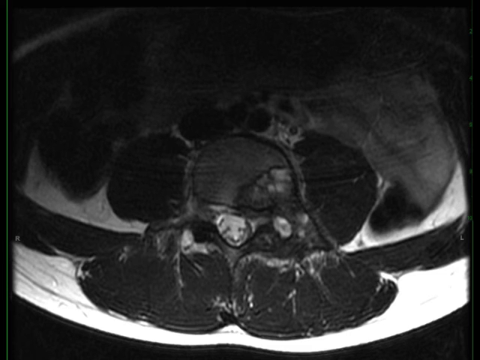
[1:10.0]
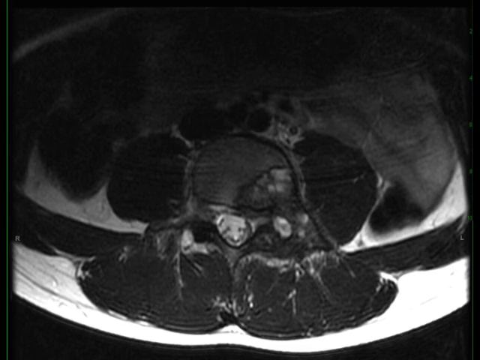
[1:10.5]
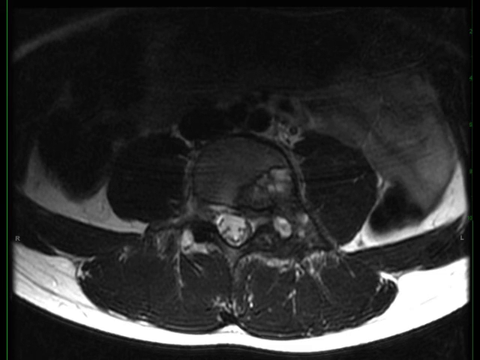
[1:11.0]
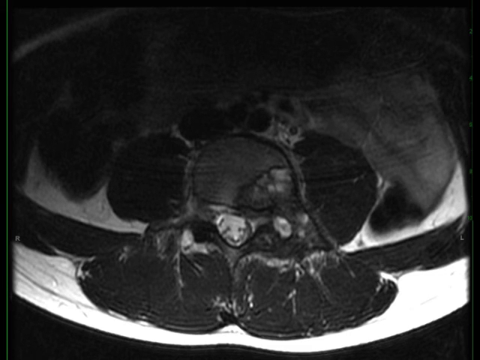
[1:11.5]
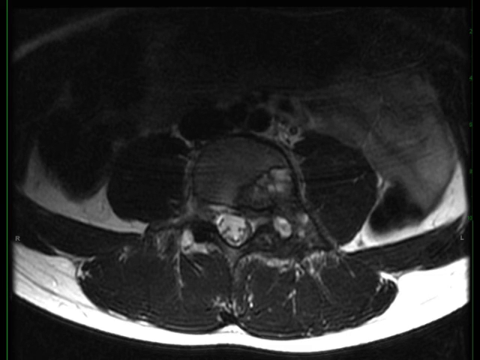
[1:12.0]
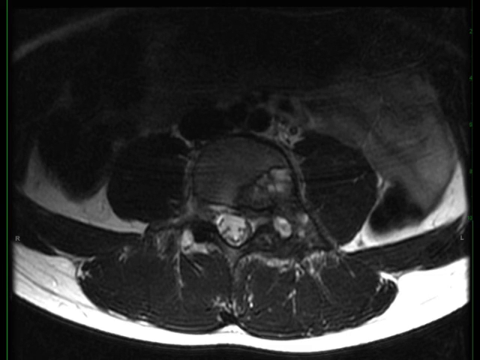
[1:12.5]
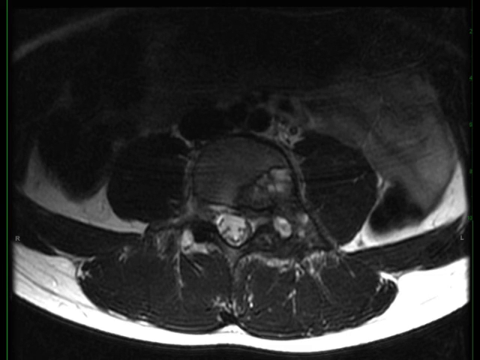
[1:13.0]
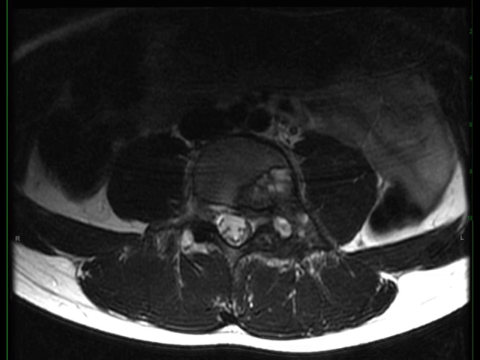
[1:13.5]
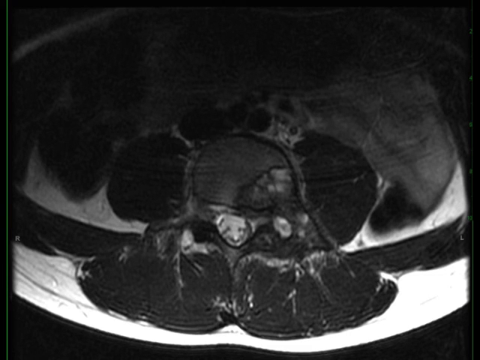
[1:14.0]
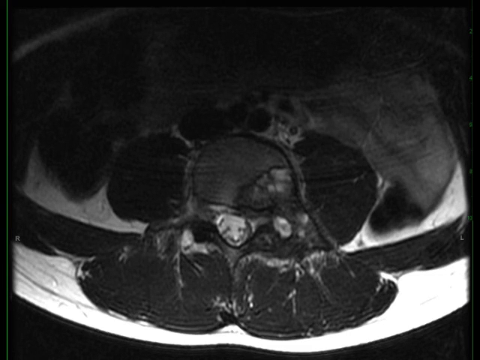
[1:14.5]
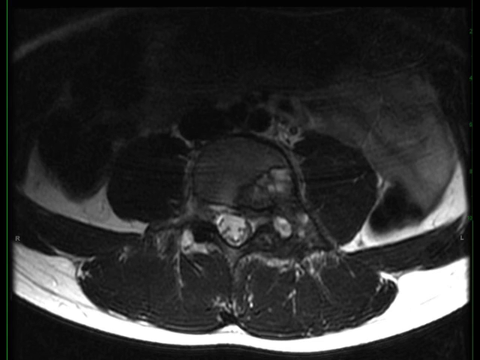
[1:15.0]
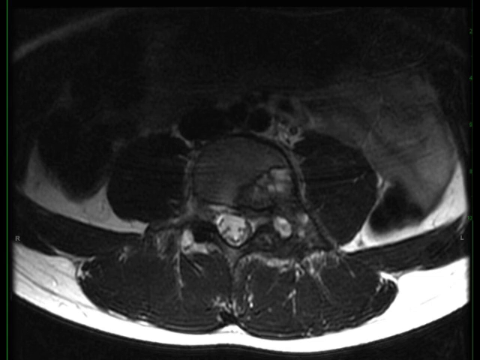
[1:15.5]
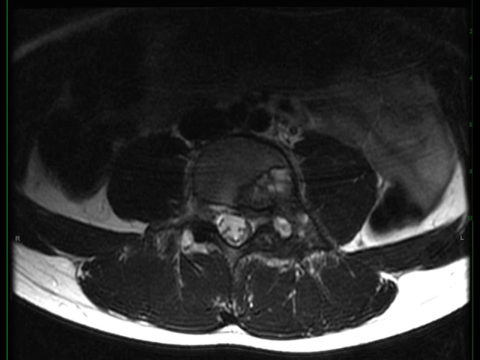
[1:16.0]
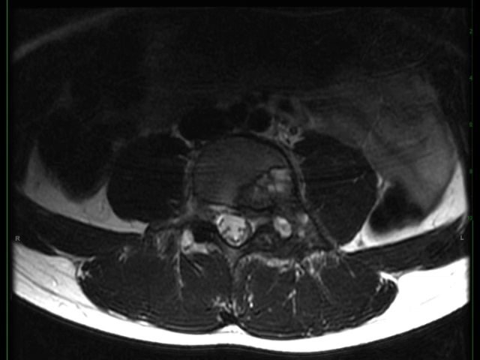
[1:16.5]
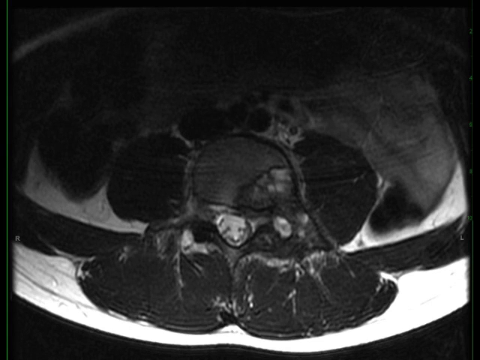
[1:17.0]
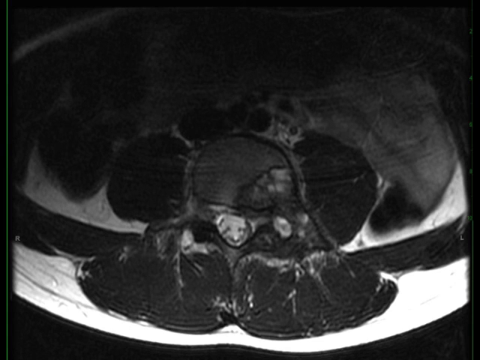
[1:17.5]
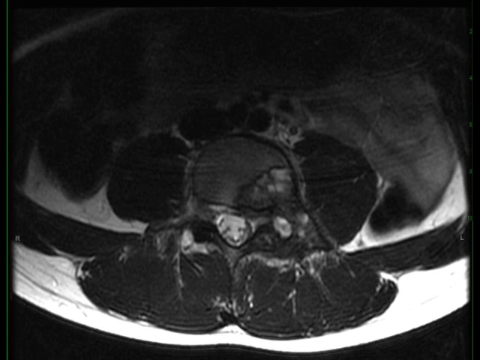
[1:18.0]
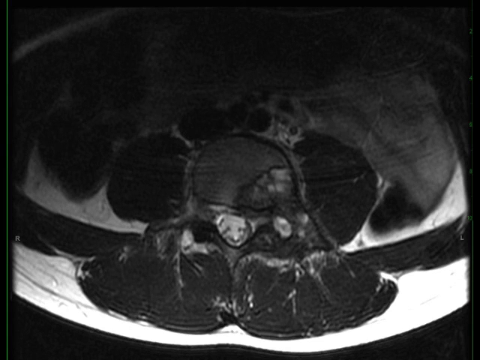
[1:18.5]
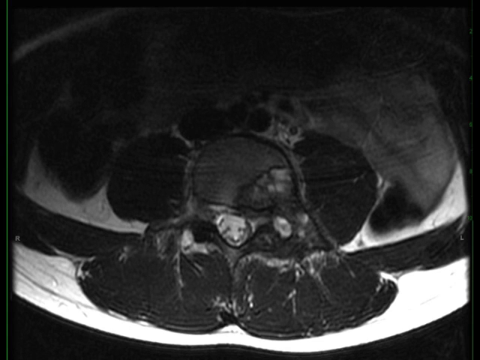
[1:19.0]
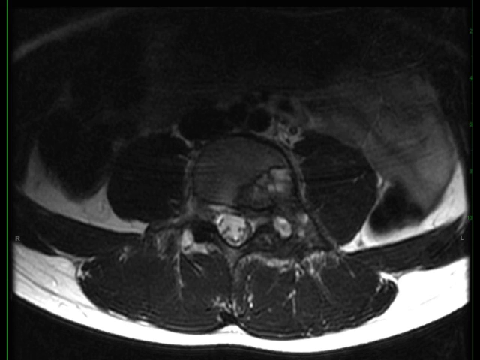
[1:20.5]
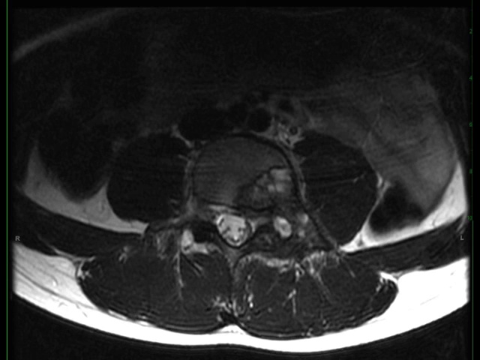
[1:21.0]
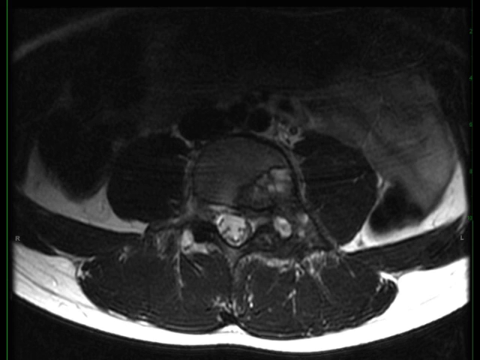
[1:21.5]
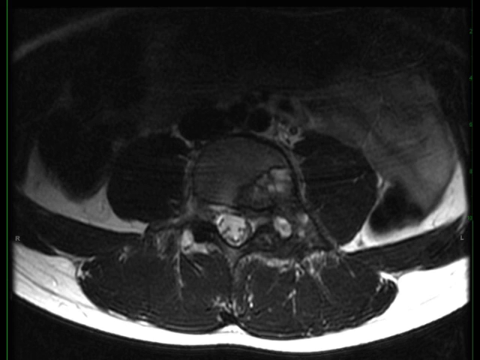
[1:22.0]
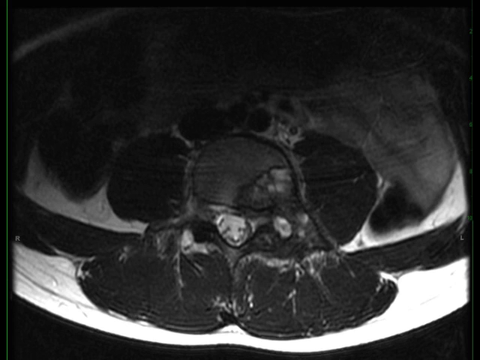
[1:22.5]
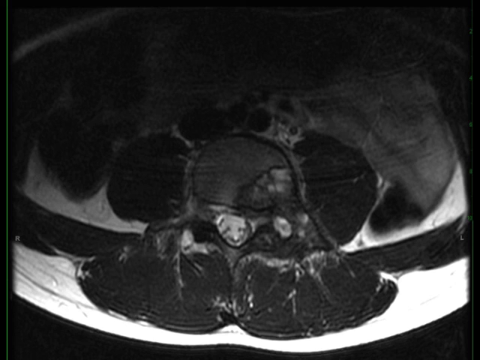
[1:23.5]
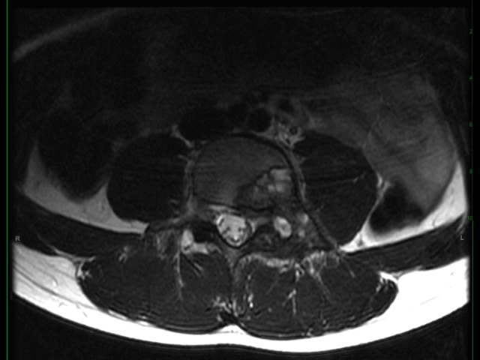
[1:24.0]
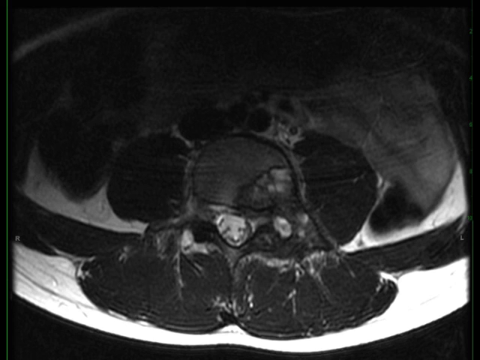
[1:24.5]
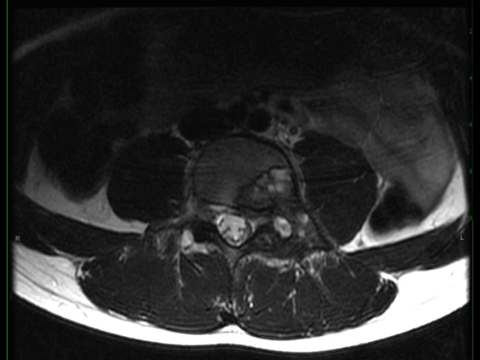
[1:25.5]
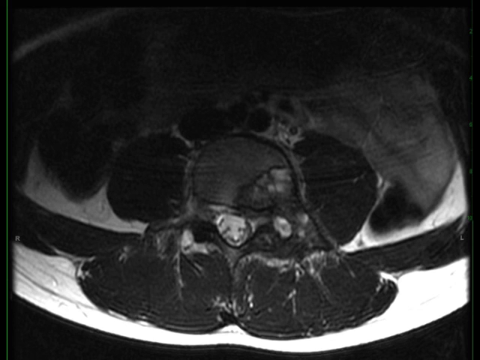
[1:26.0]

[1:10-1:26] An x-ray viewed from the top shows reddish oval shapes at the bottom, darker in color, with white lines going through them. At the top are two dark oval areas, and in the middle is a lighter gray area. At the very top, a gray area engulfs over half of the page and looks as if it is a solid area. On the right is a darker pointed area with lighter around it. A white area with striations engulfs and highlights the dark area. In the front are two semi-round objects; at the front of the object on the left, it looks like a band connects it to one of the top dark objects. There is a long, very misshapen circle, and the circle on the right is a little larger than the smaller circle on the left.